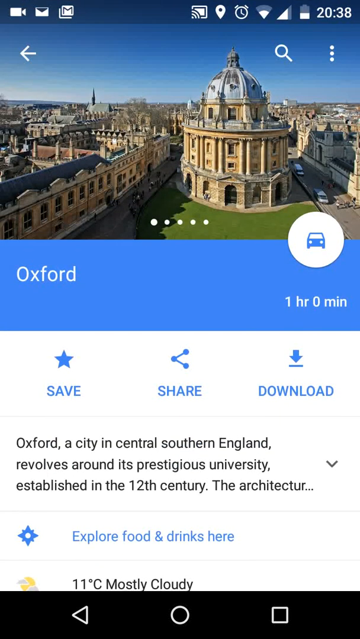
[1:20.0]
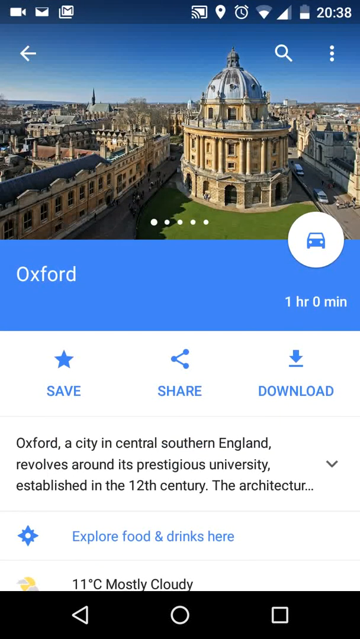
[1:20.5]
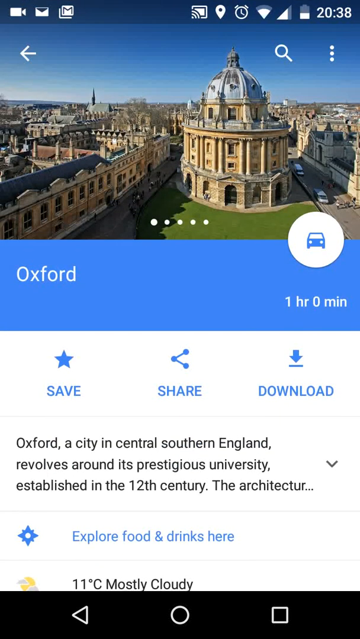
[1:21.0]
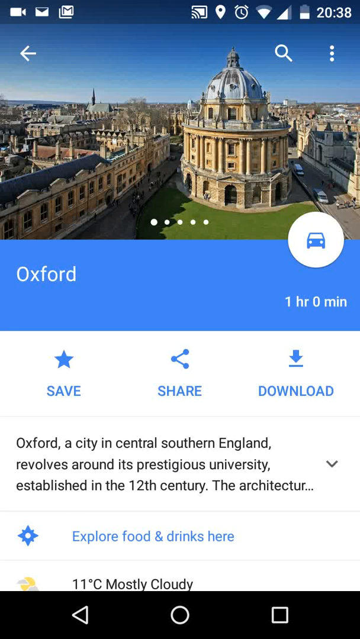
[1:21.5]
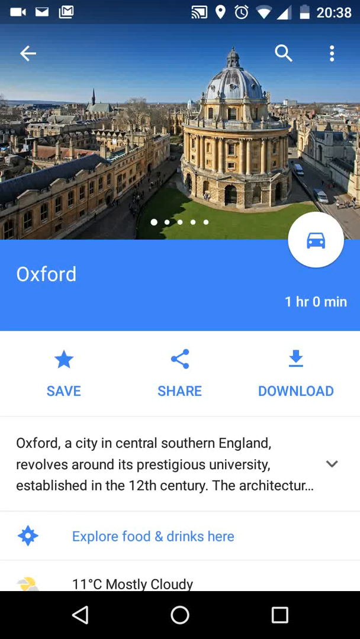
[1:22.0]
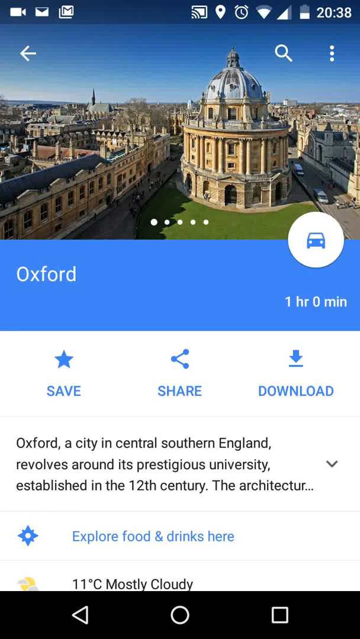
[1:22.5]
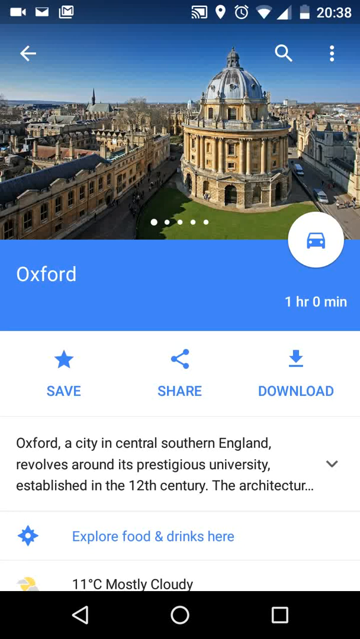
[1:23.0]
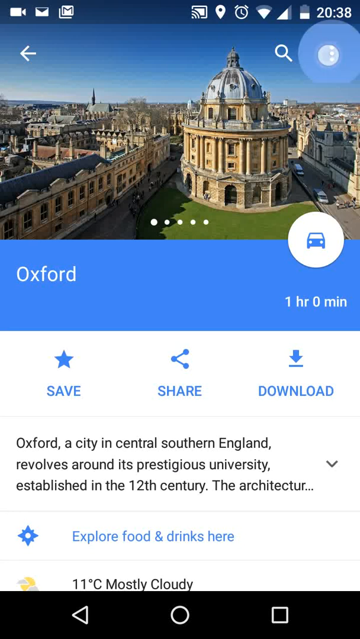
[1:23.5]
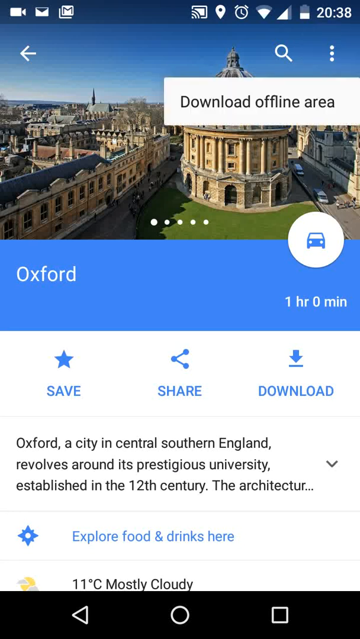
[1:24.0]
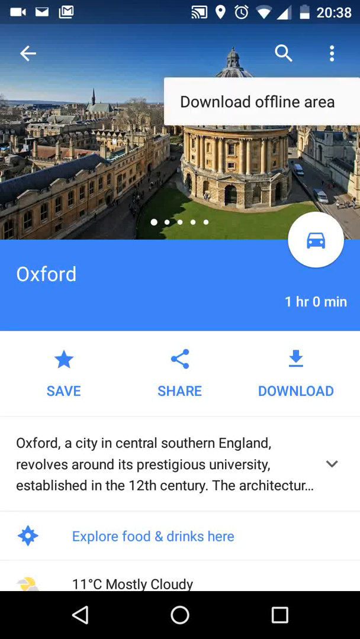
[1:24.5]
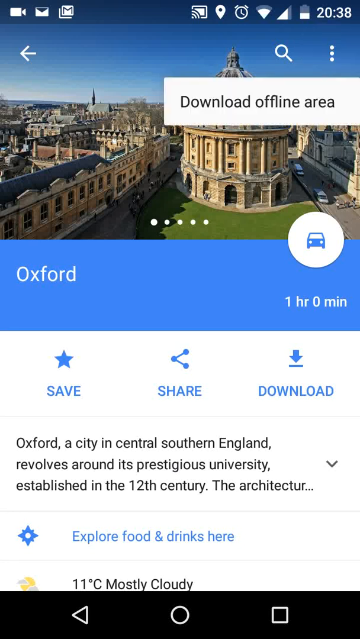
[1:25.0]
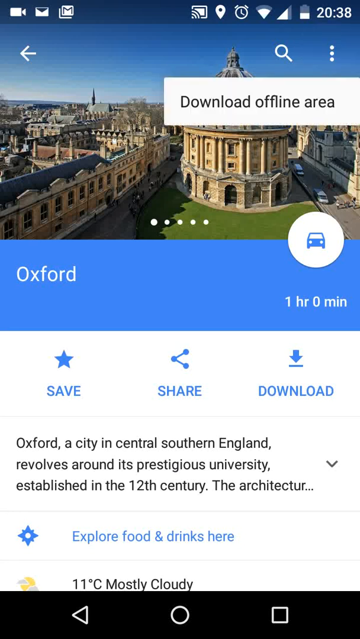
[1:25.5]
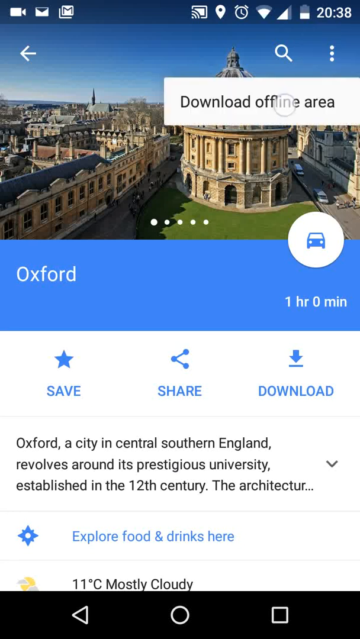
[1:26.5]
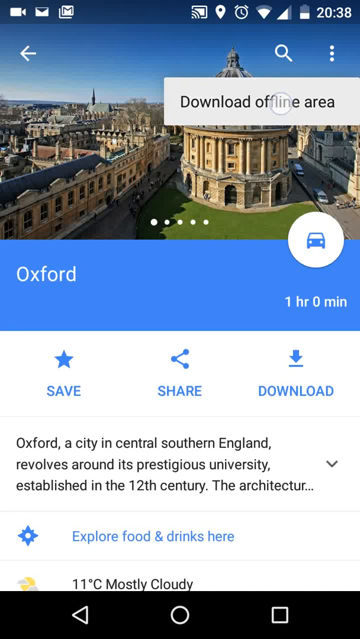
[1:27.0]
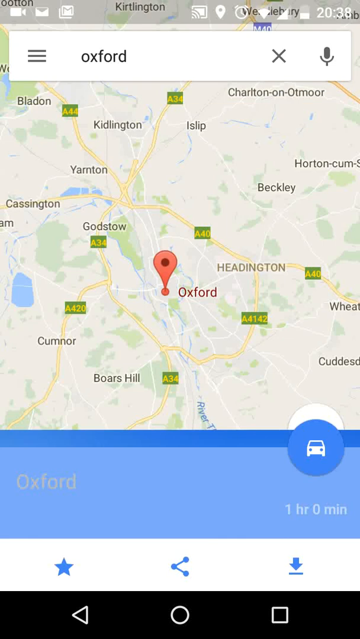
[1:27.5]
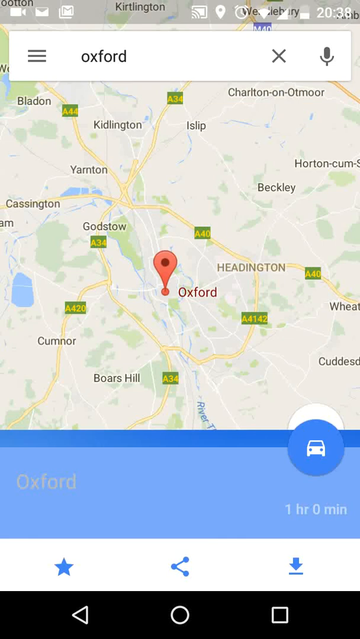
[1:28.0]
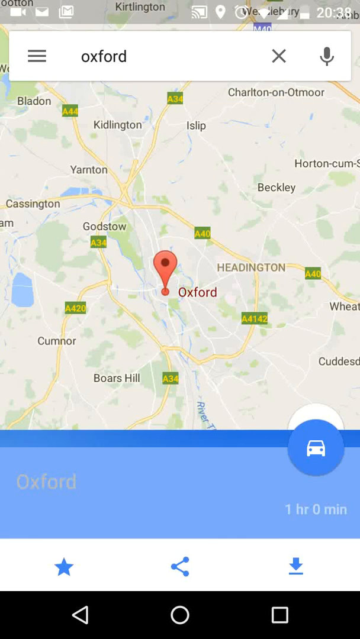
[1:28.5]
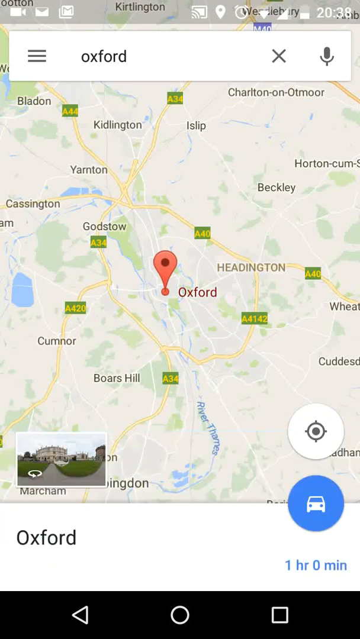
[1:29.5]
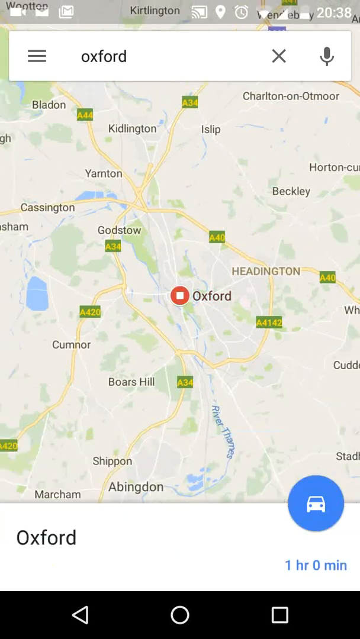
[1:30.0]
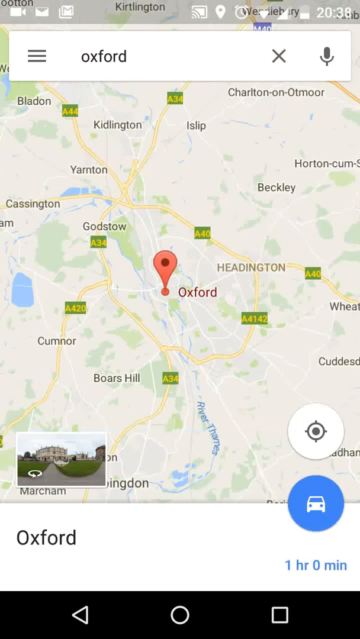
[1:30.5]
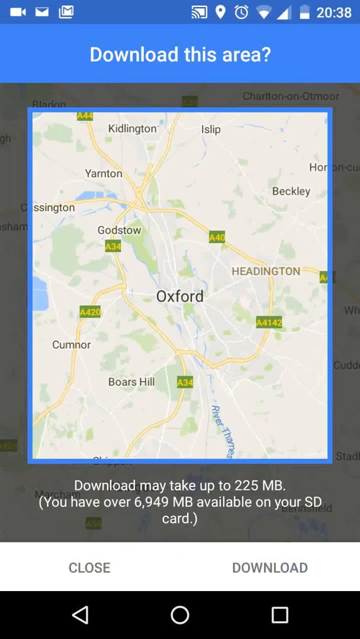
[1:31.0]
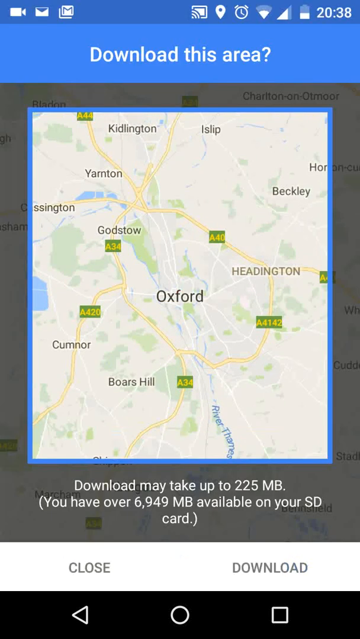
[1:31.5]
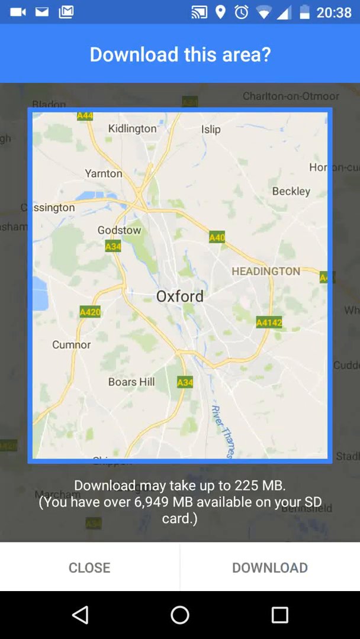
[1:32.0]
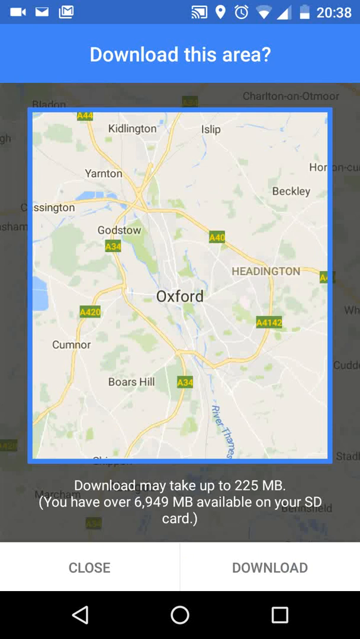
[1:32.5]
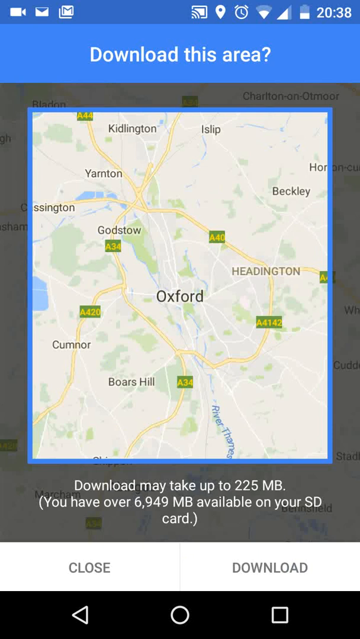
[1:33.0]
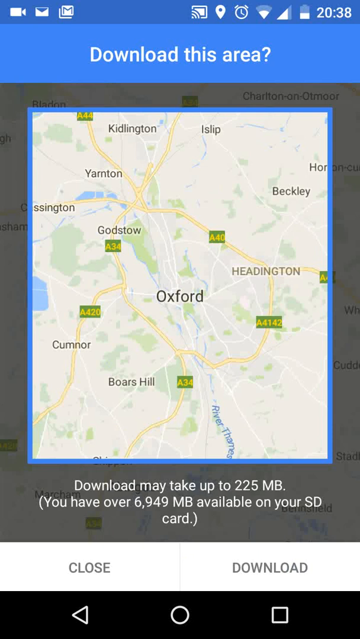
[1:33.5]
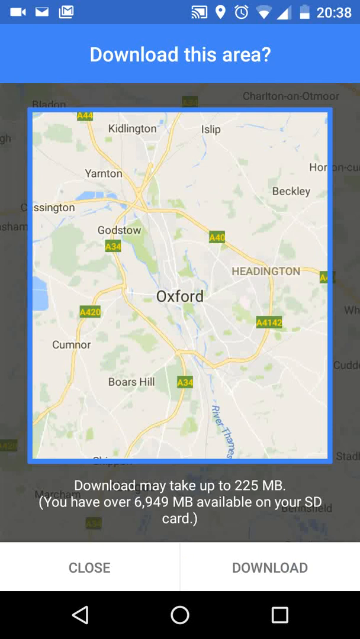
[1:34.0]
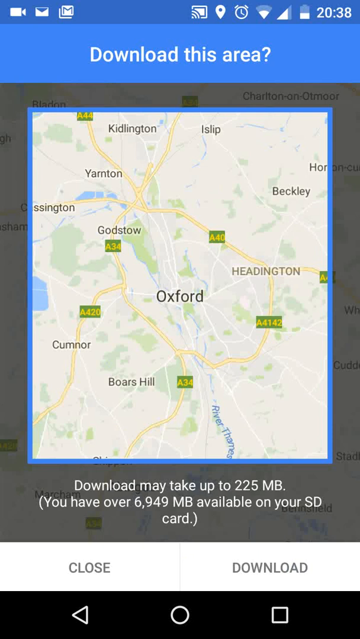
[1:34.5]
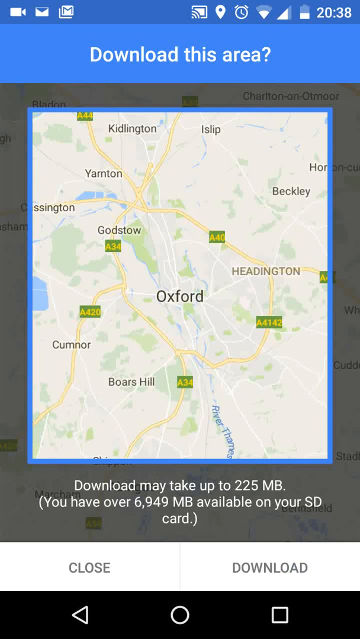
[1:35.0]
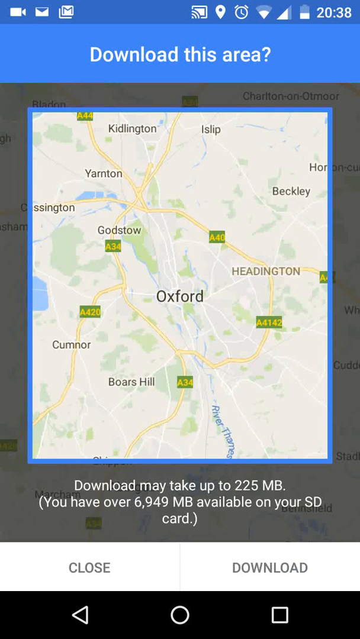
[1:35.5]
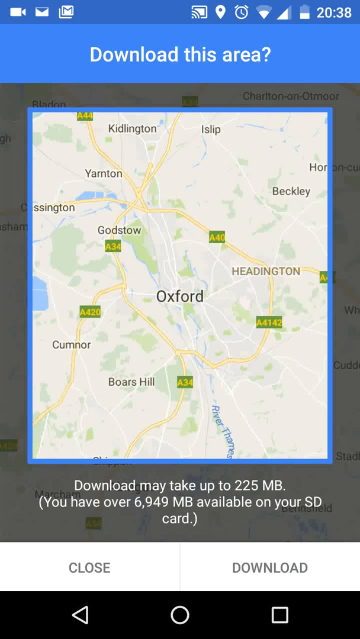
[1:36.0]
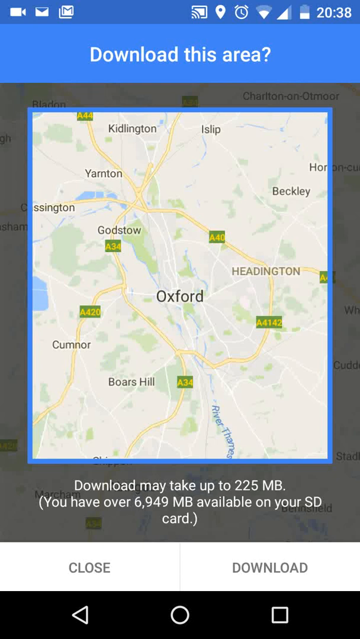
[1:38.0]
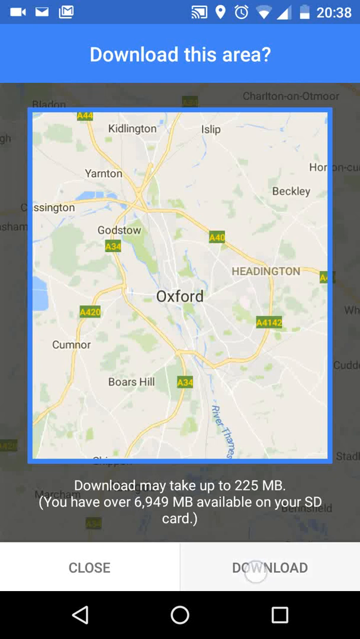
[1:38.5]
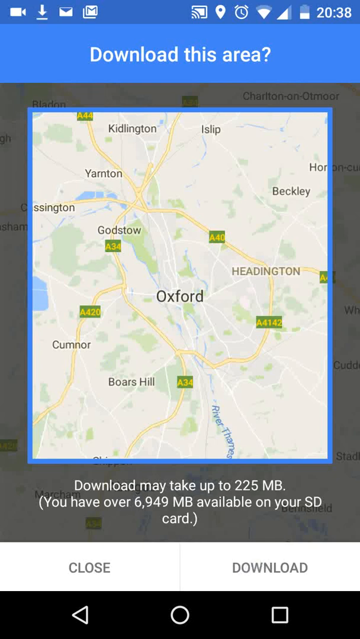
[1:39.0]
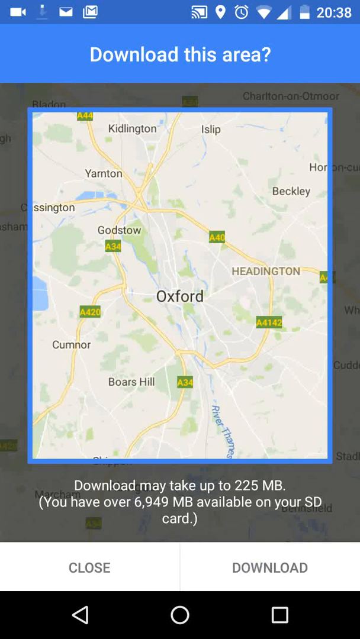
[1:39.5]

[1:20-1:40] He taps the three little dots at the top, and instead of a settings menu, a white pop-up box reading "download offline area" appears right underneath, over the top part of the Oxford cathedral picture. He taps it, a spinning buffering wheel appears, and the Oxford page returns with Oxford in the text field. The pin moves around on the map, and a blue border now surrounds about ninety percent of the area, with the outskirts of the city faded or darkened. Text reads that the download may take up to 225 megabytes and notes almost seven thousand megabytes available on the SD card. A disclaimer box at the top says "download this area". At the very top of the phone, a white arrow going up and down apparently indicates downloading.